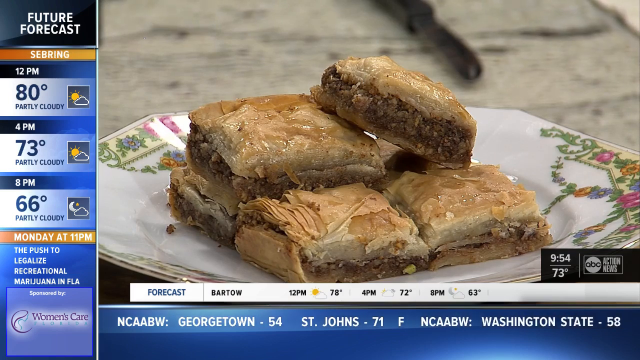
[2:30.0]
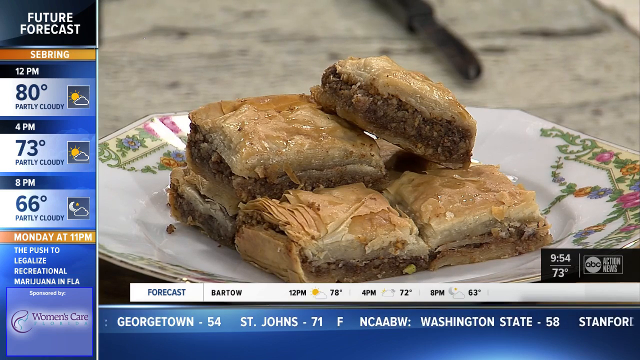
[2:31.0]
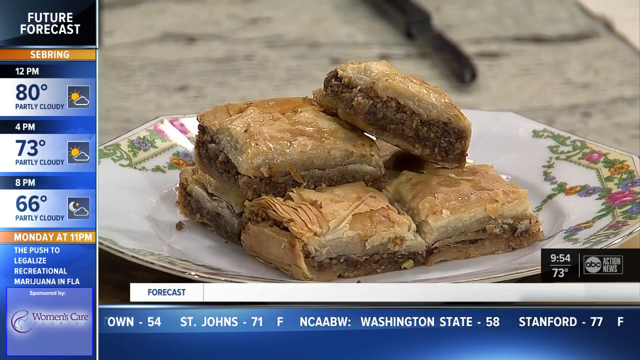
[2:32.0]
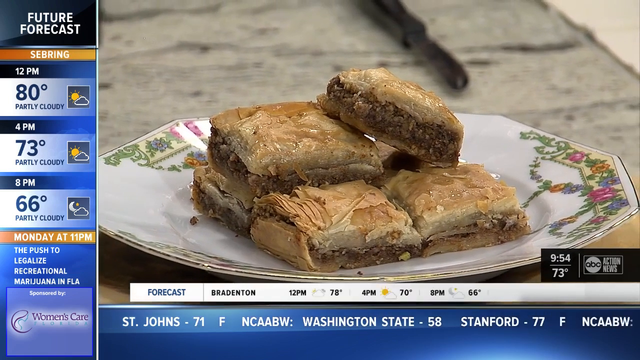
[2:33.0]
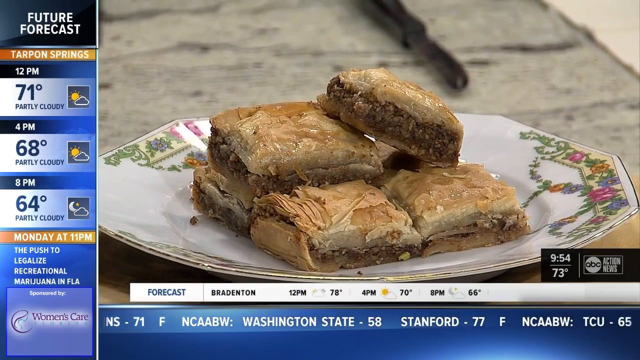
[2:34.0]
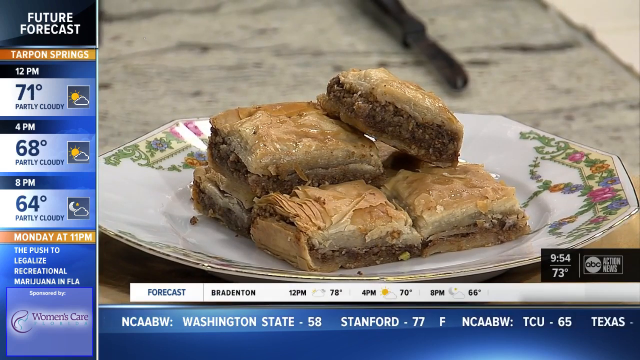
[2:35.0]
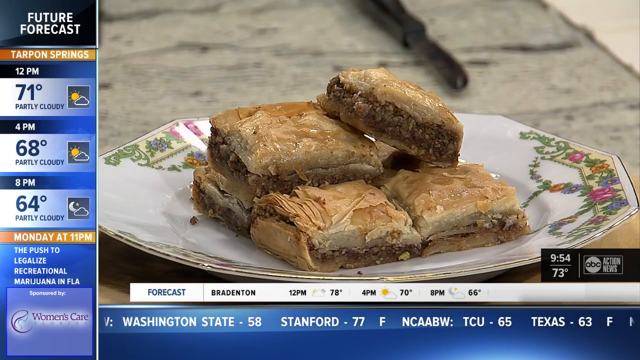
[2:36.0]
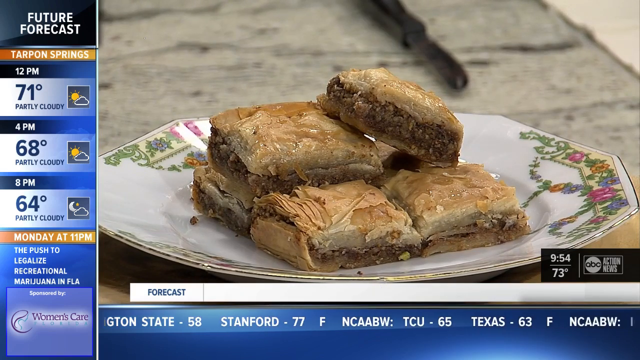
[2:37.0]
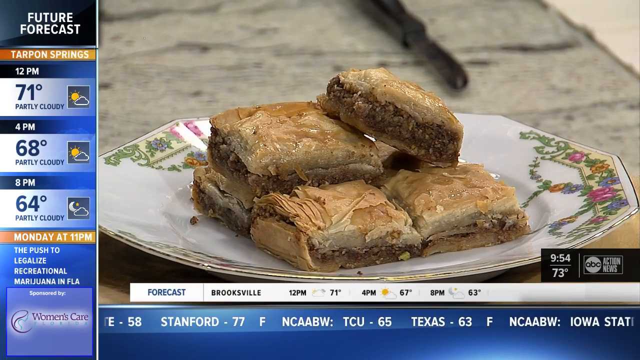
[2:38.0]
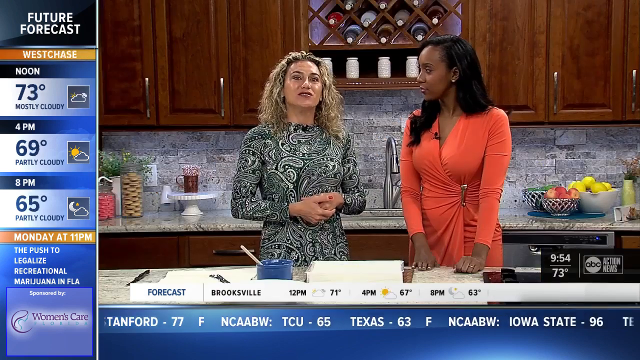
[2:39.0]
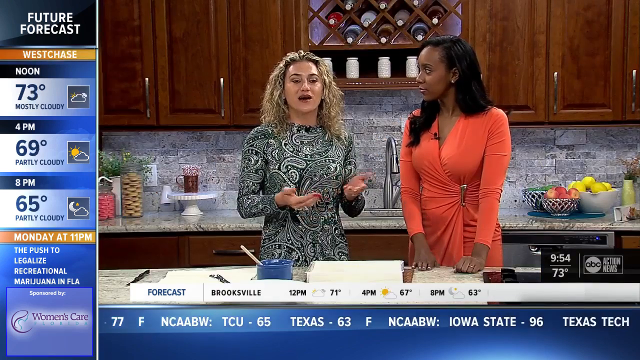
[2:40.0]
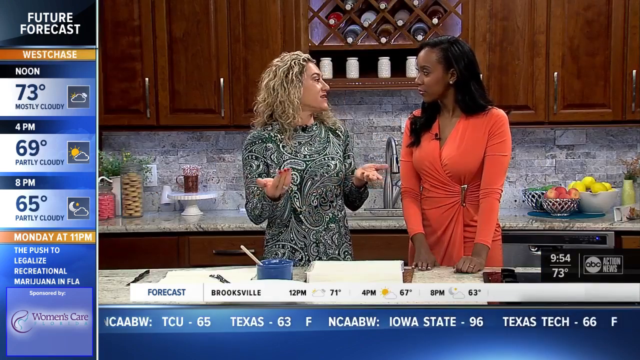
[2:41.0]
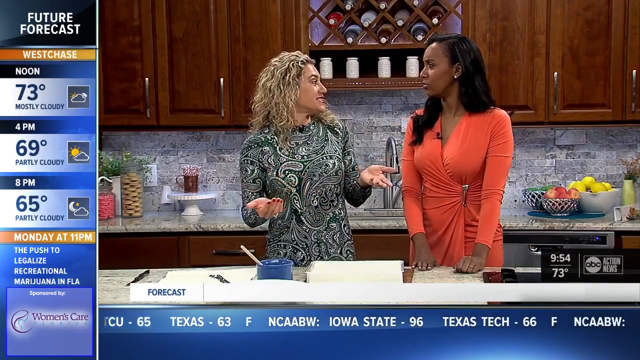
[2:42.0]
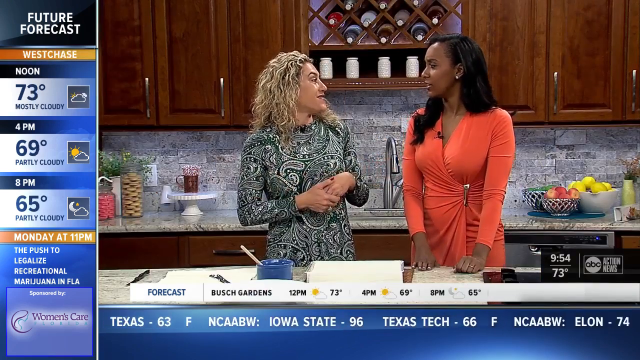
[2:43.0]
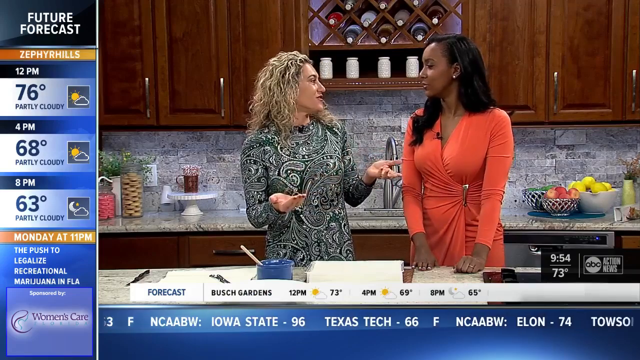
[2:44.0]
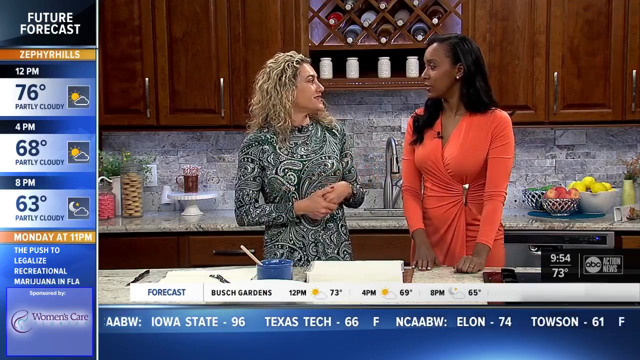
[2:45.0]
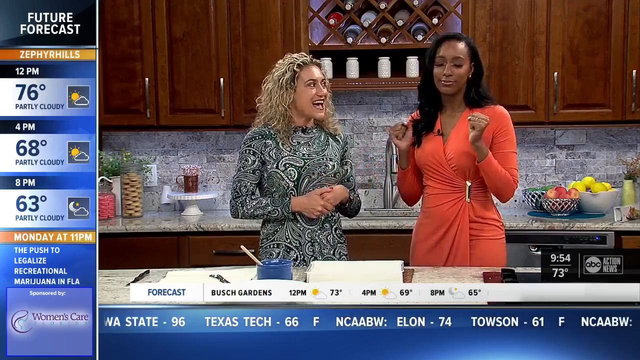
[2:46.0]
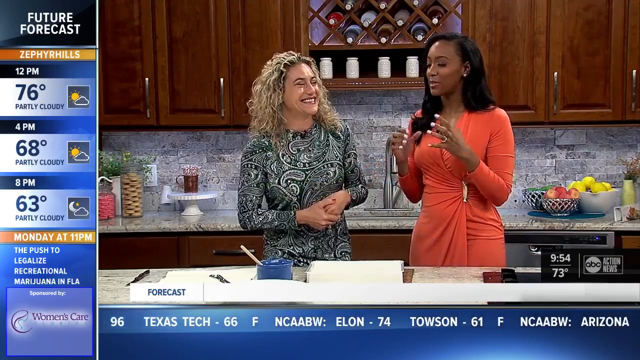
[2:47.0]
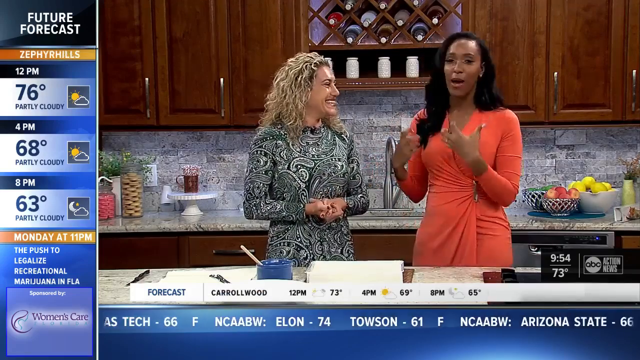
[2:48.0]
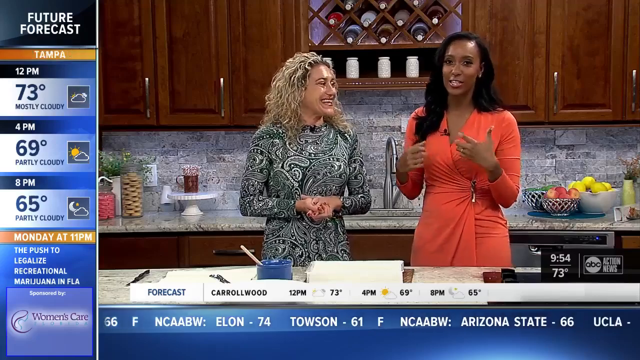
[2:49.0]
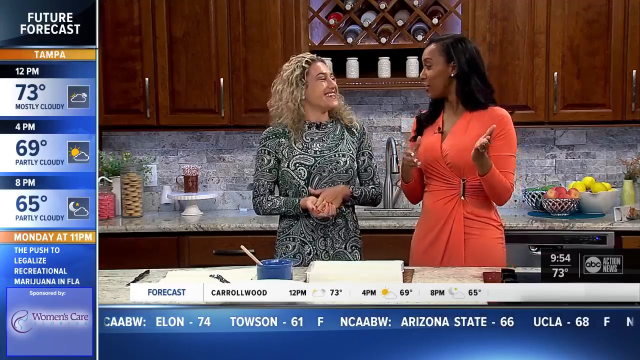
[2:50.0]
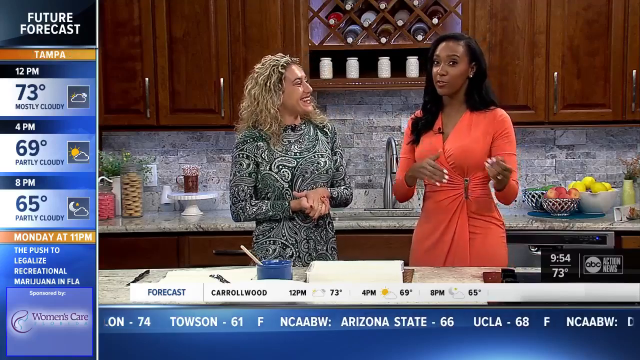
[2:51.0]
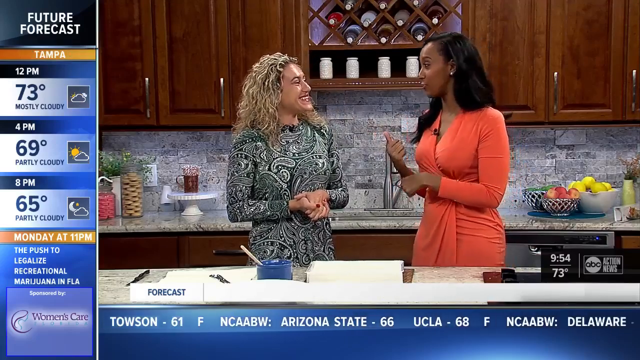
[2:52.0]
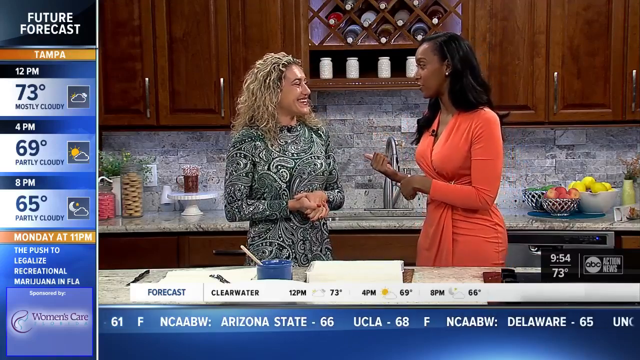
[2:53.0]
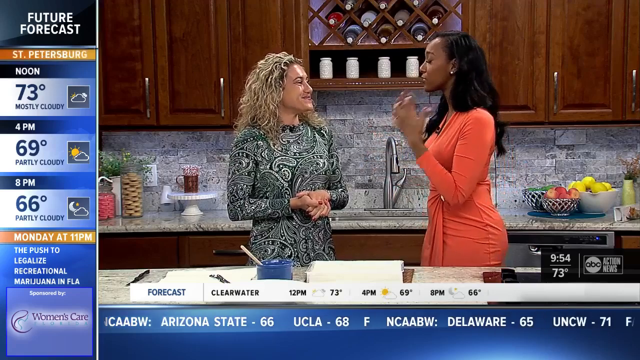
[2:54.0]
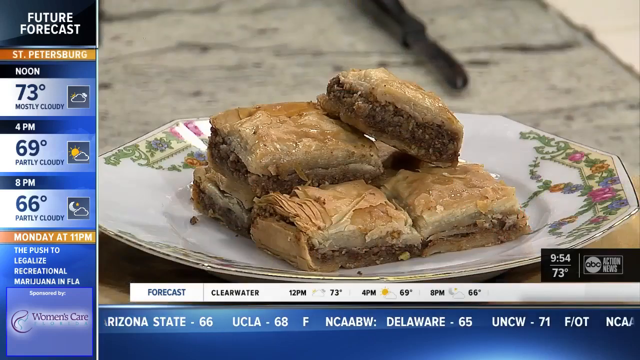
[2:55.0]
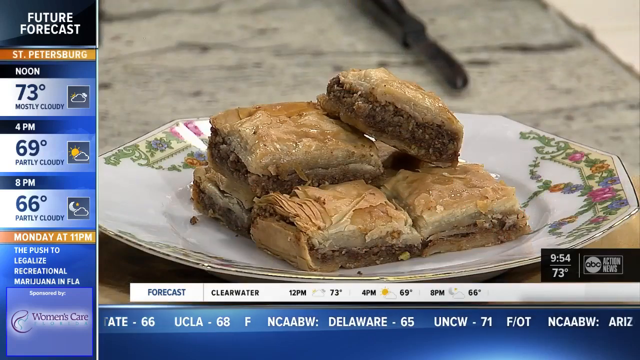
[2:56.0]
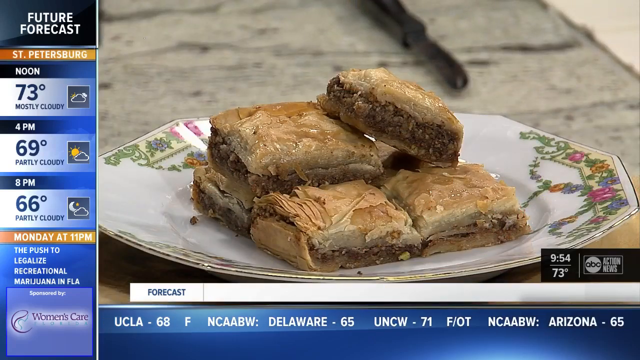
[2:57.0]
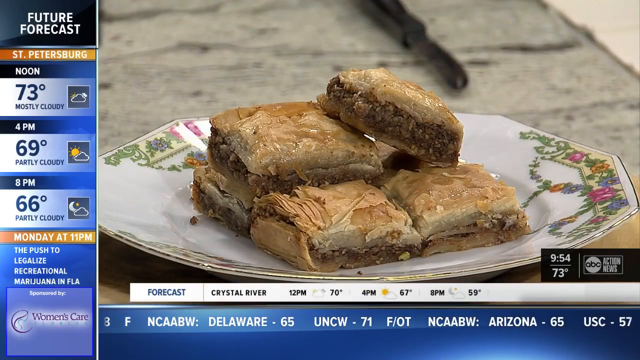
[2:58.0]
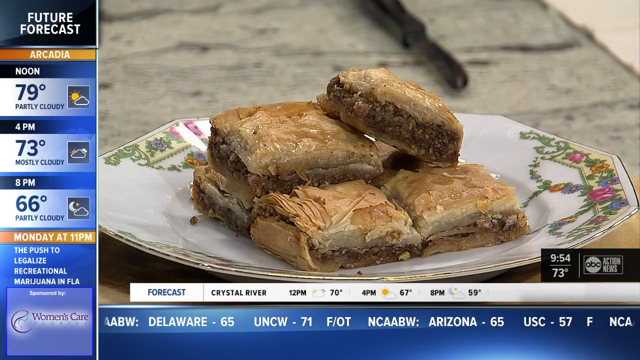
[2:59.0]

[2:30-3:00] The final baked goods are cut into portions that look like squares and are on the plate. Some layers are not filled with filling, and it is somewhat thick at the top, possibly because the lower layers were filled and a top layer was left unfilled. The plate has a pattern and looks to be an octagon, apparently with eight sides, with a small dip in the middle. Designs that look like flowers are on the ends of the plate. Weather information is shown down below, different from the left side, which shows Tarpon Springs: 12pm, 71 degrees, partly cloudy; 4pm, 68 degrees, partly cloudy; 8pm, 64 degrees, partly cloudy. The view pans back to the kitchen, where the women are speaking again, moving their hands as if something were very pleasing; the African American woman seems to take over the conversation. Then there is a close-up of the final dessert.